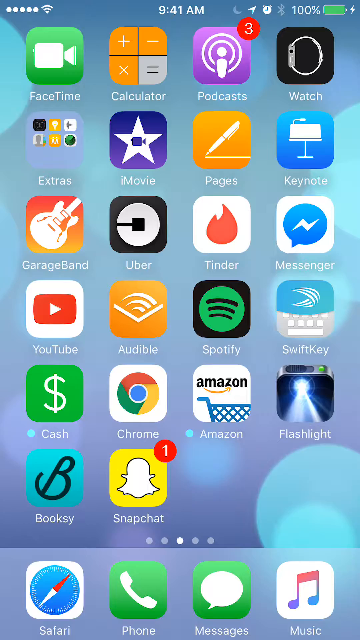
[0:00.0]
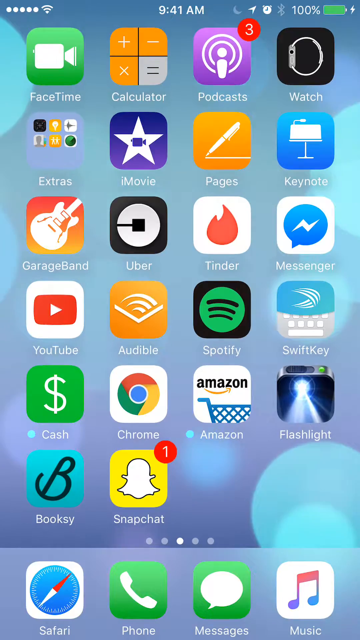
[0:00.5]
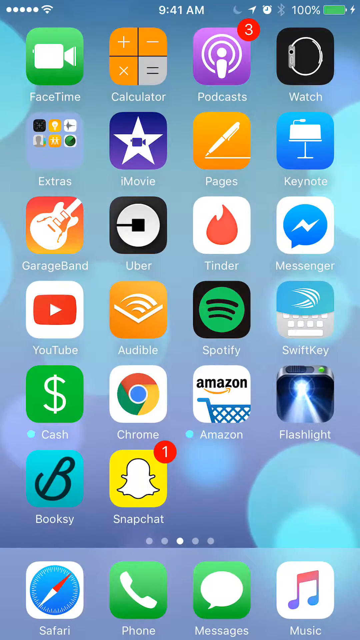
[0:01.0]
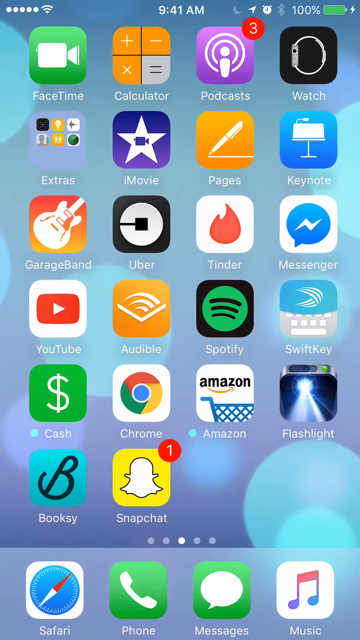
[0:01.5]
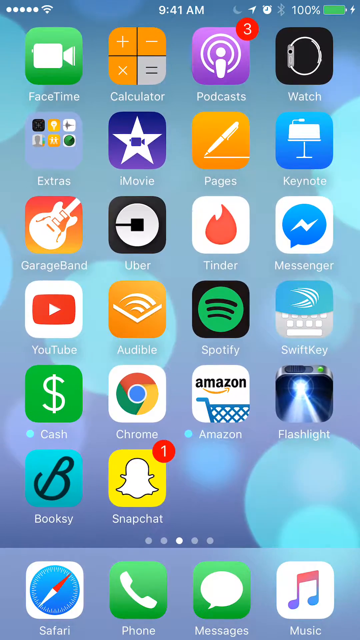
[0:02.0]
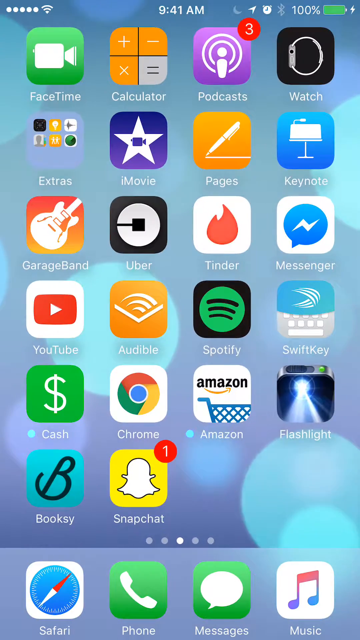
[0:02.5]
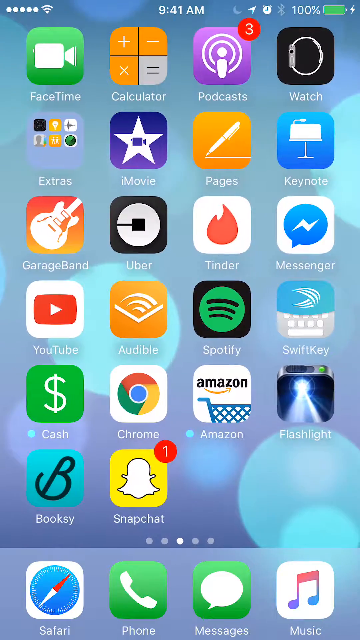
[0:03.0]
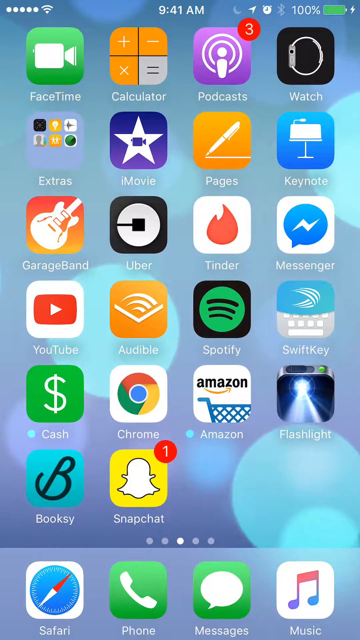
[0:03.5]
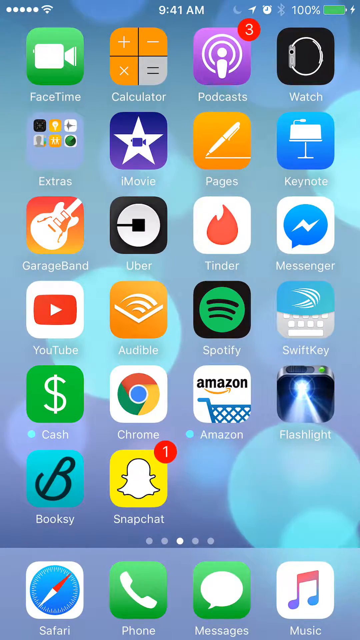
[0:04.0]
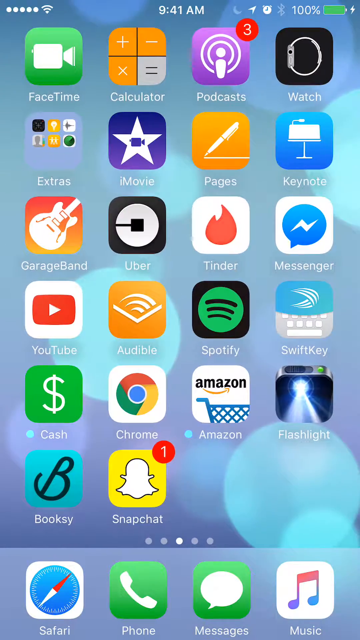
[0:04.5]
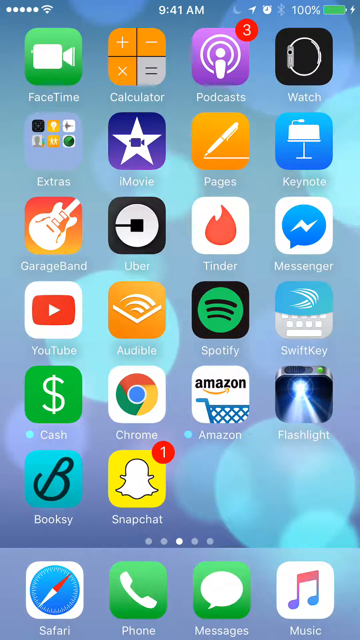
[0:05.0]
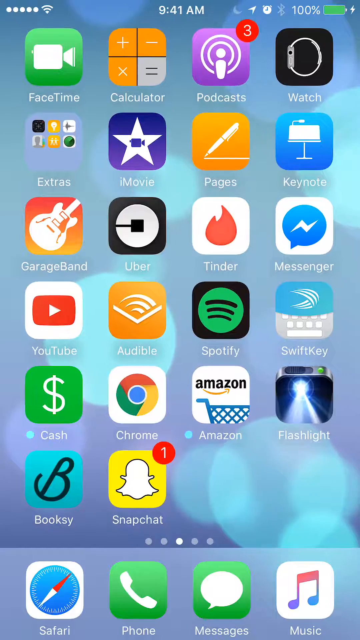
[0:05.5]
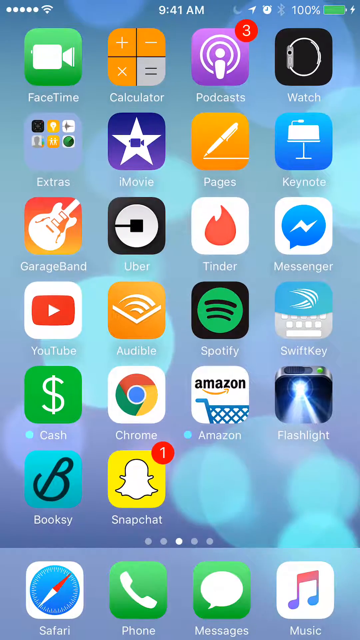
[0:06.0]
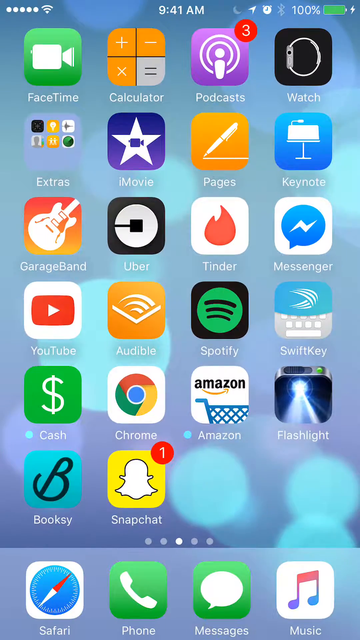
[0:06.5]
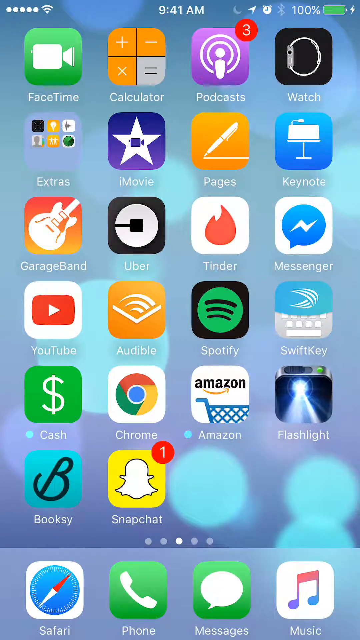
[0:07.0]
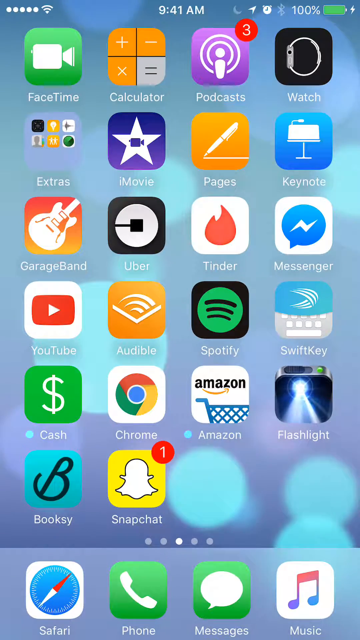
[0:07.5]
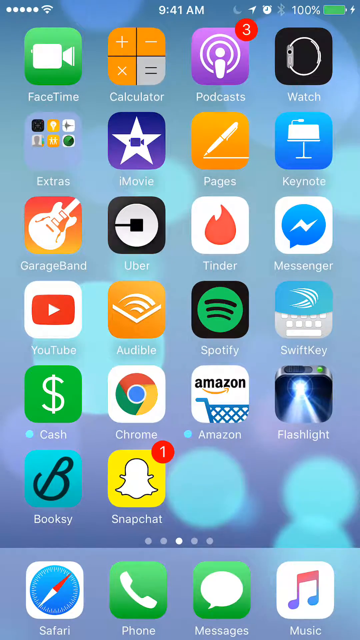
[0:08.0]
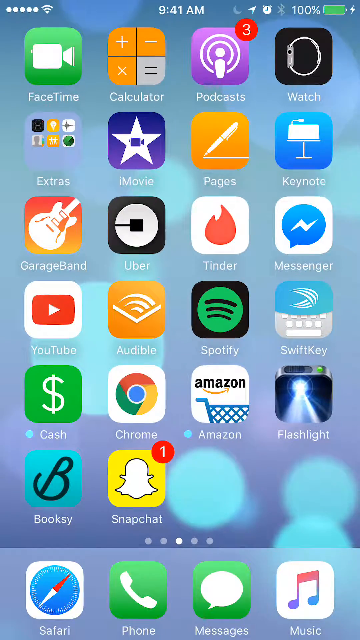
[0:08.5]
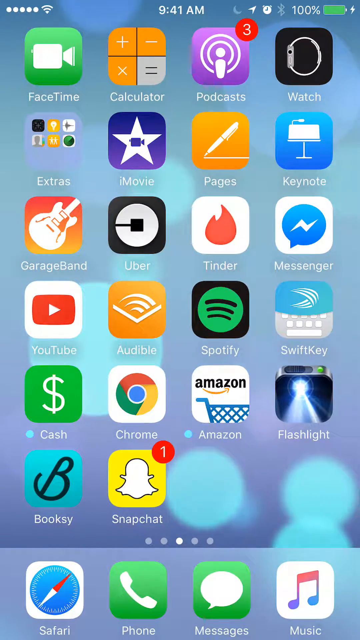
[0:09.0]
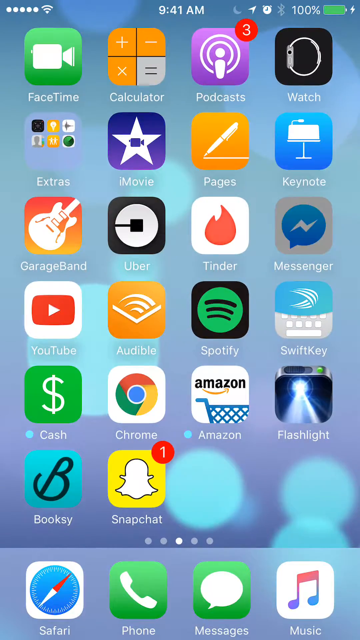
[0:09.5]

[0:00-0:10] A mobile phone's display is shown on the screen, with a variety of apps on it, including Amazon, FaceTime, Calculator, Postcard, Keynote, Page, iMovie, YouTube, the Cash app, Google Chrome, Flashlight and Snapshot.